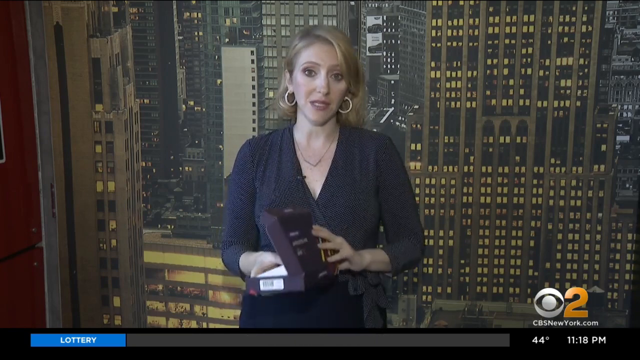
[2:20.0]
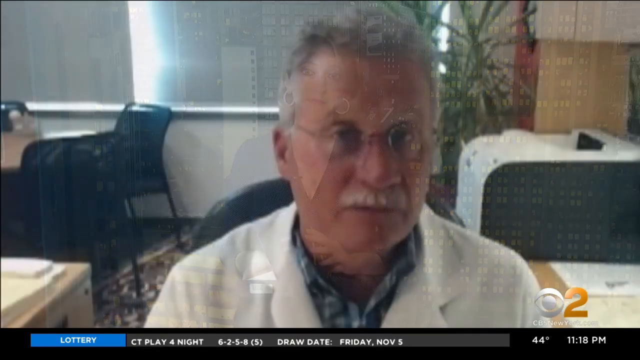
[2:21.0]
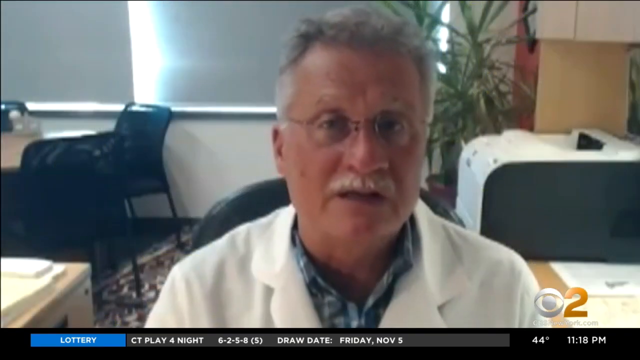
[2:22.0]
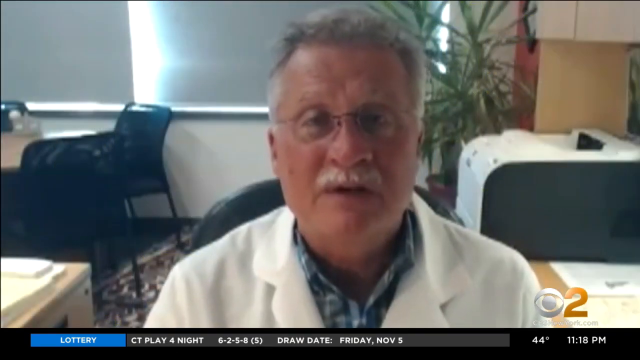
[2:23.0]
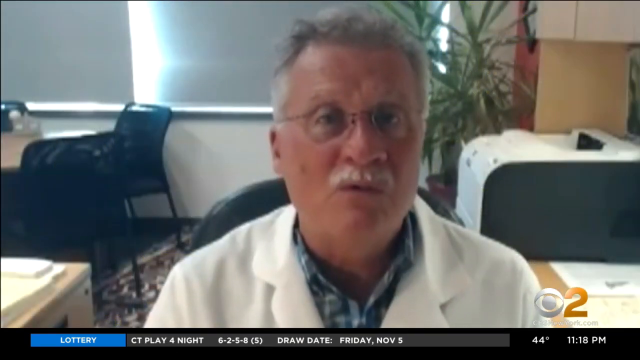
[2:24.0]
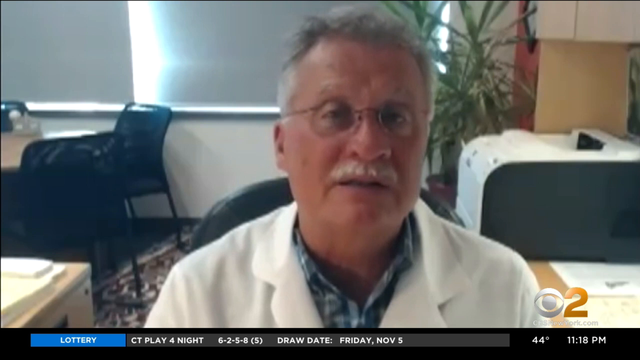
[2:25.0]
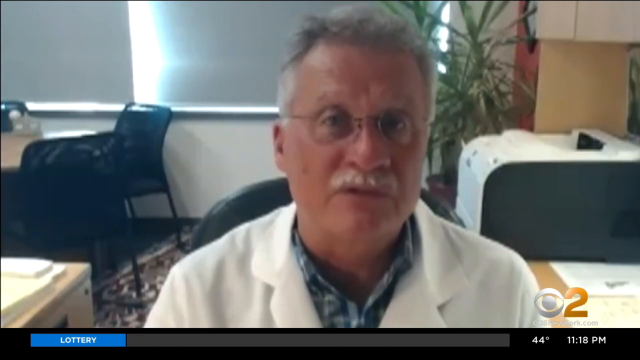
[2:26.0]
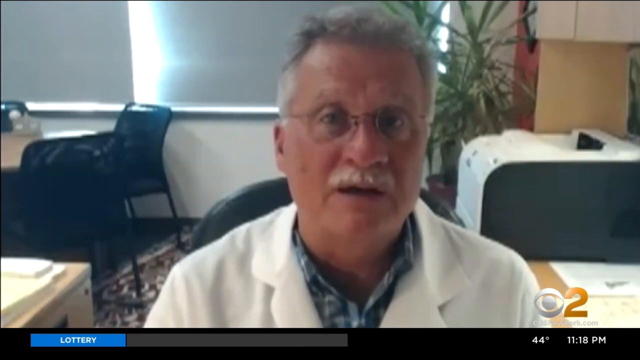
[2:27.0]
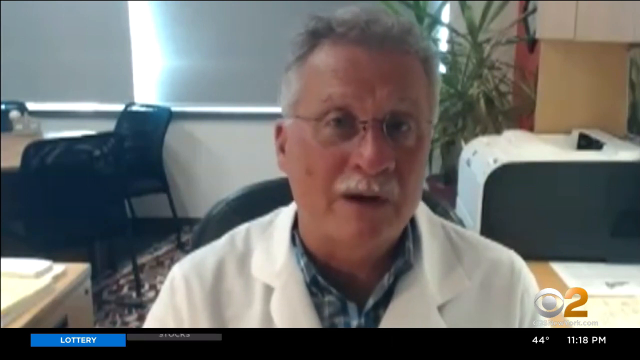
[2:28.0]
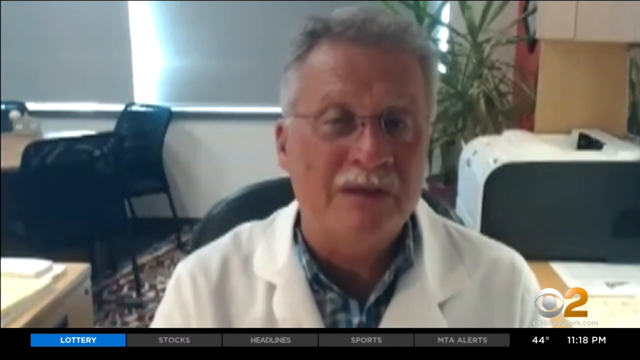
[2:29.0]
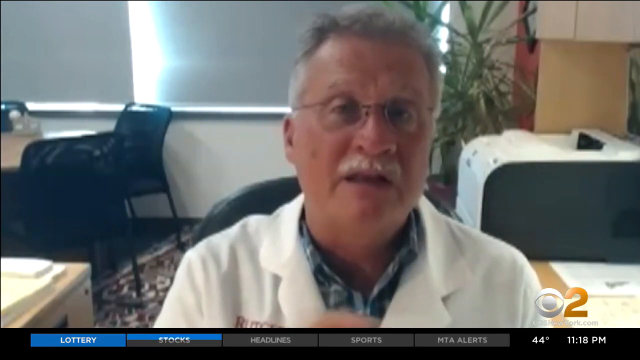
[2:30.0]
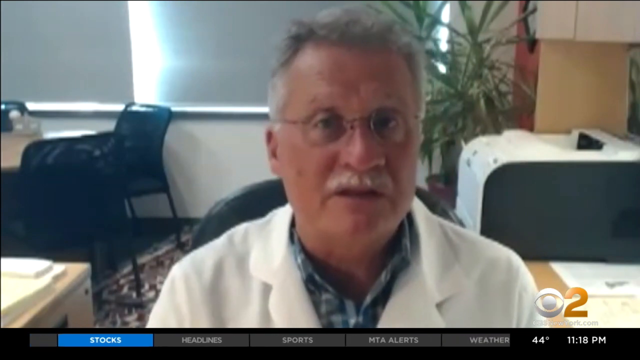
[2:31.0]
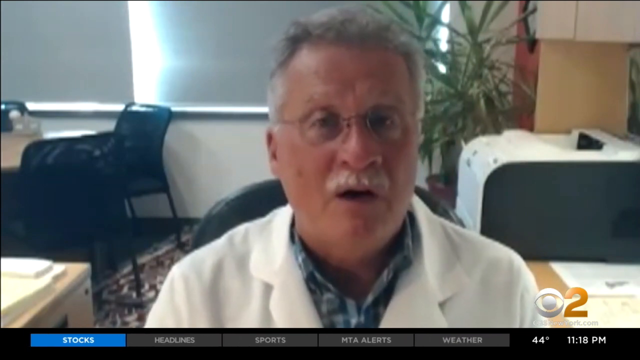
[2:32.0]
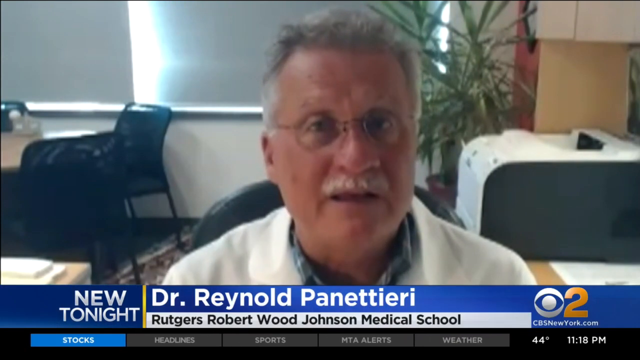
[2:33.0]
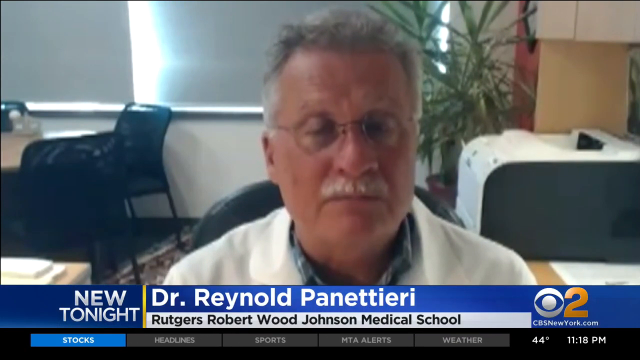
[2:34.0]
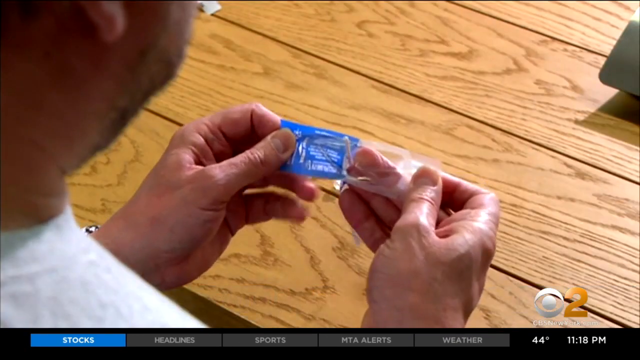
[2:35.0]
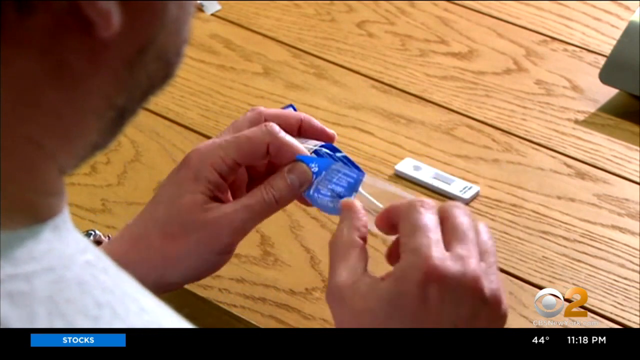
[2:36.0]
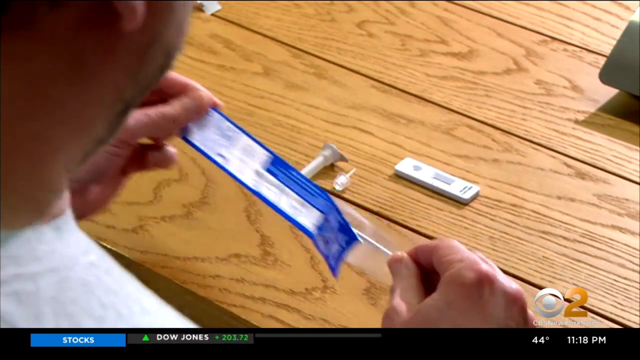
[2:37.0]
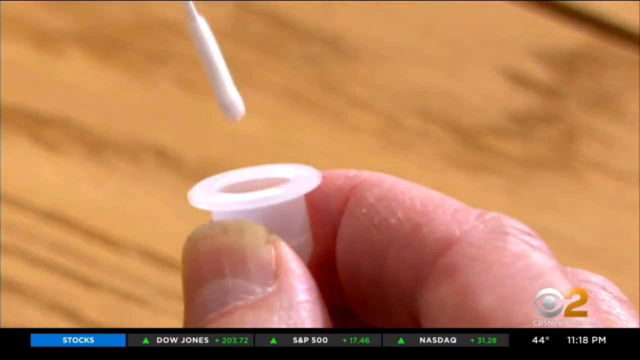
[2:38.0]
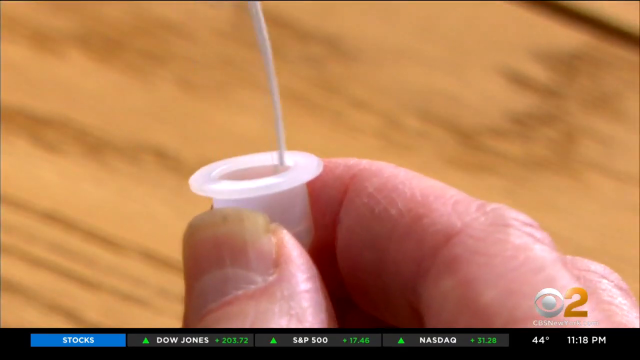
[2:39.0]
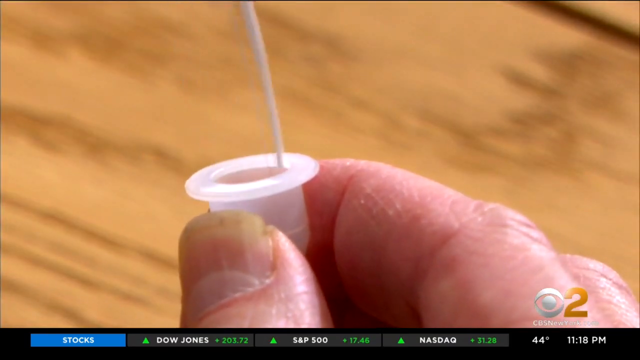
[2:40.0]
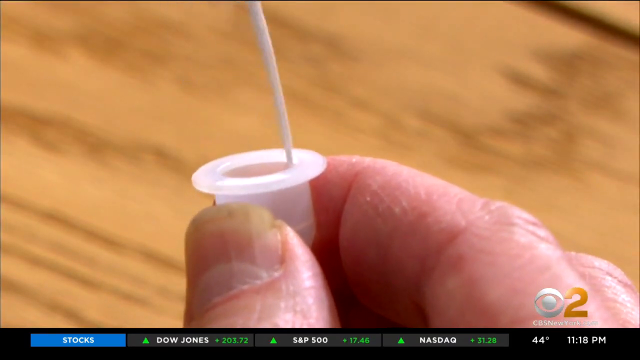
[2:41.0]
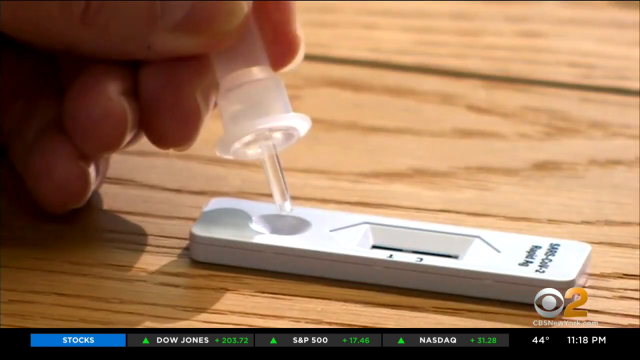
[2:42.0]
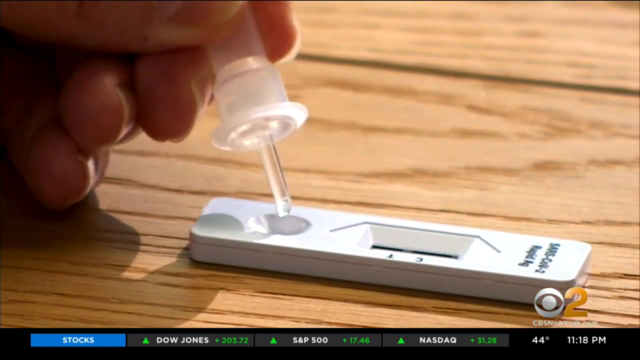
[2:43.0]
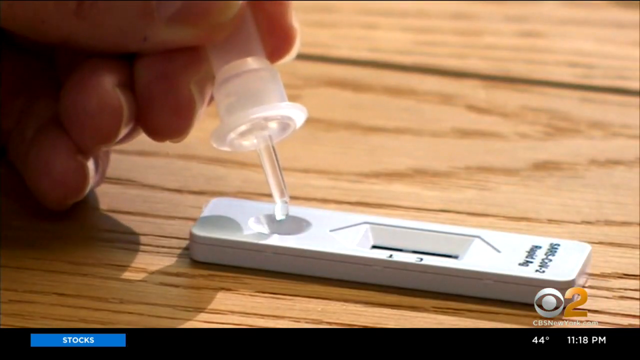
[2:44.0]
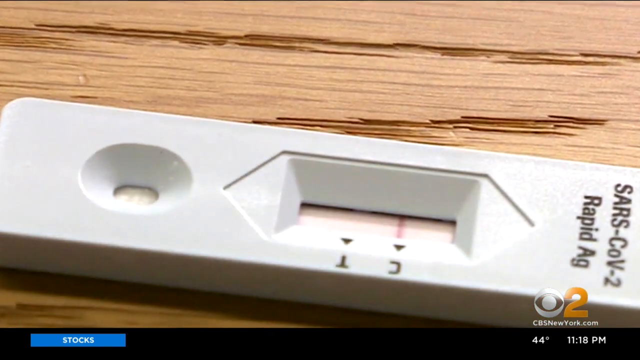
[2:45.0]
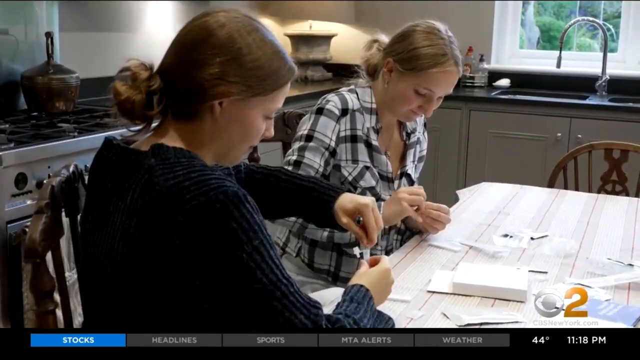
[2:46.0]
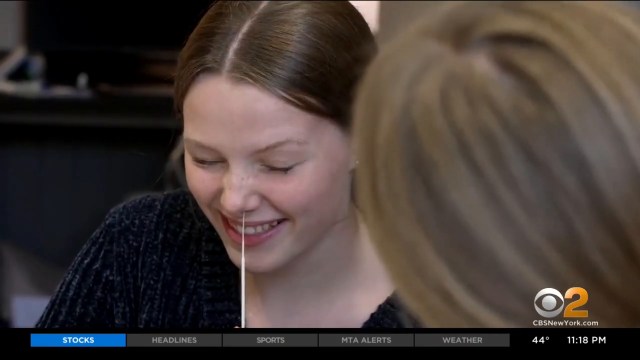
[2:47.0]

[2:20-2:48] A man talks to the camera; he looks like he may be a doctor. He is Dr. Reynold Panettieri. He wears a white lab coat over a collared shirt and glasses, and has short gray hair and a gray mustache. The room has a table in the left corner with black chairs around it, a green plant behind his right shoulder, and white equipment next to the plant. Footage then shows someone opening a COVID test, using the swab to collect a sample, and putting the swab into a small plastic cup. Finally, two women sit at a table, smiling and using a COVID test, and one of them puts the swab in her nose.